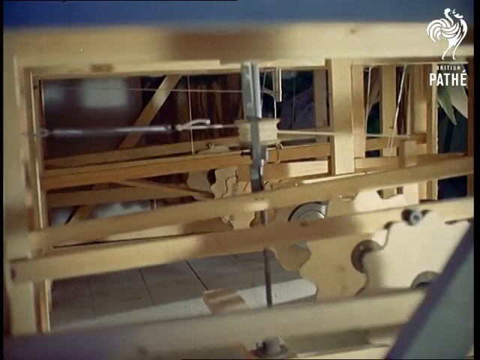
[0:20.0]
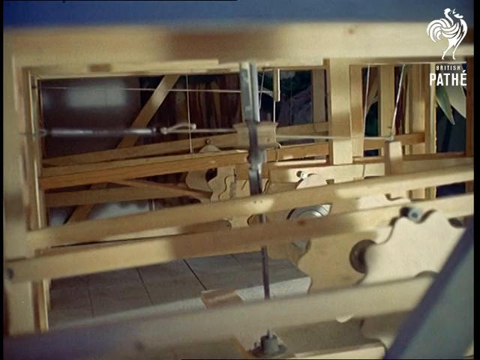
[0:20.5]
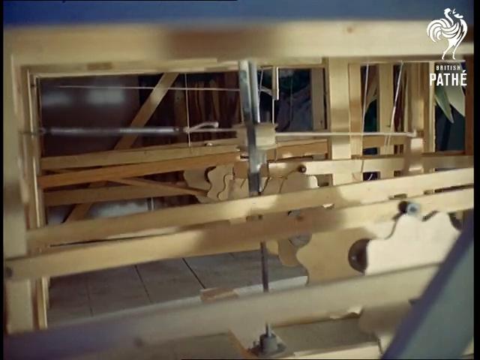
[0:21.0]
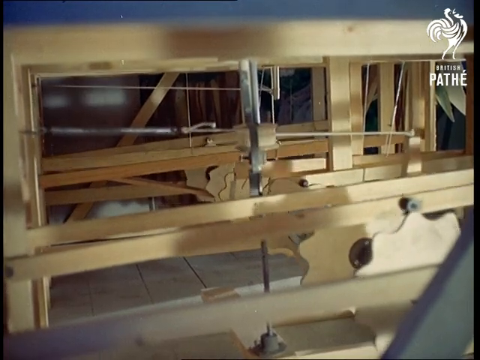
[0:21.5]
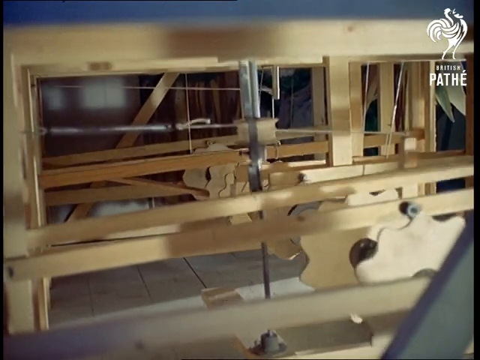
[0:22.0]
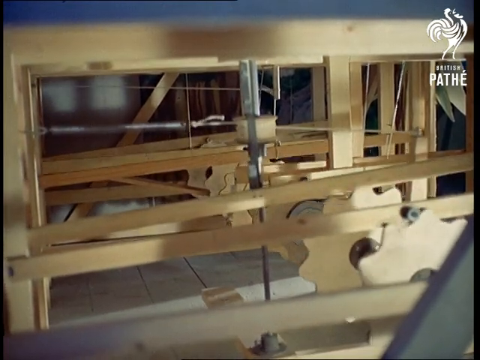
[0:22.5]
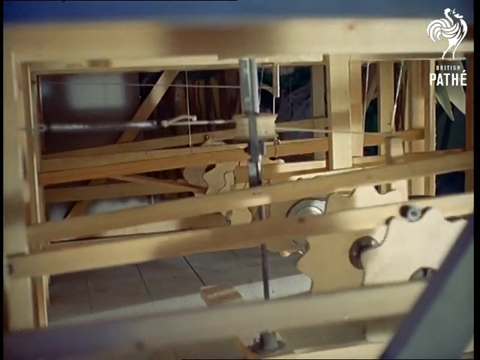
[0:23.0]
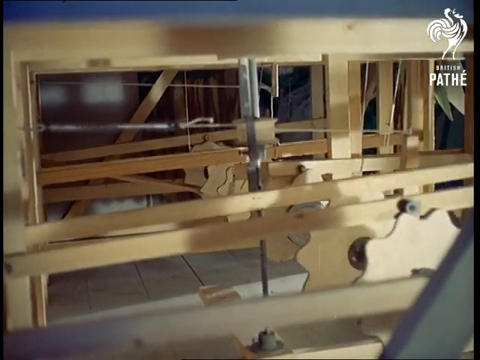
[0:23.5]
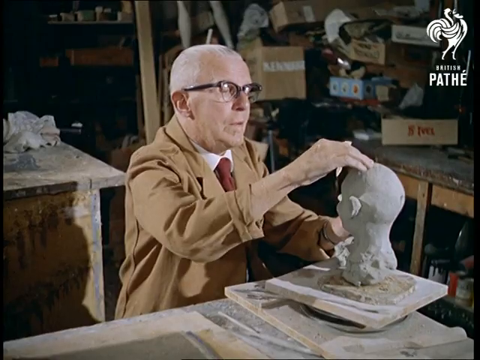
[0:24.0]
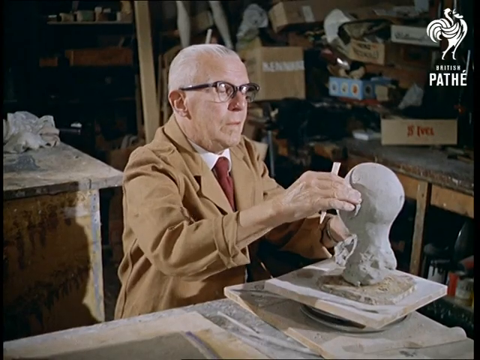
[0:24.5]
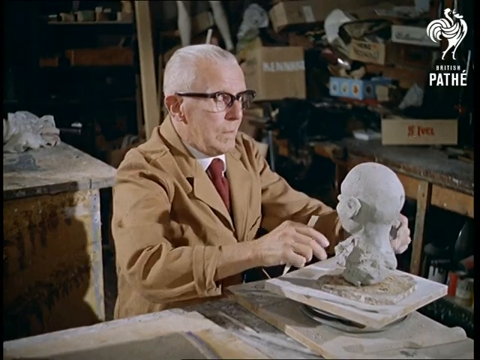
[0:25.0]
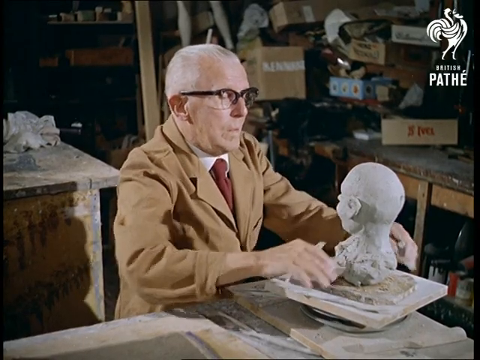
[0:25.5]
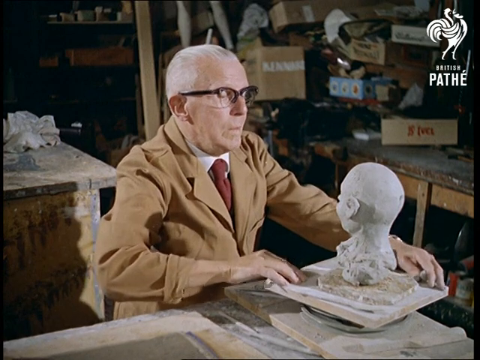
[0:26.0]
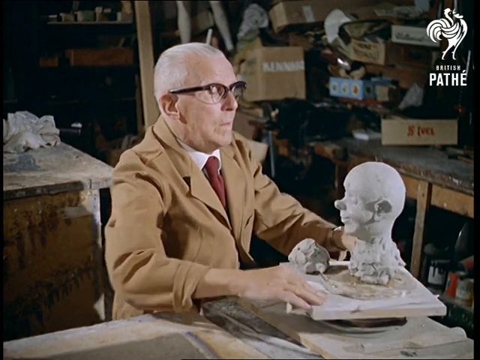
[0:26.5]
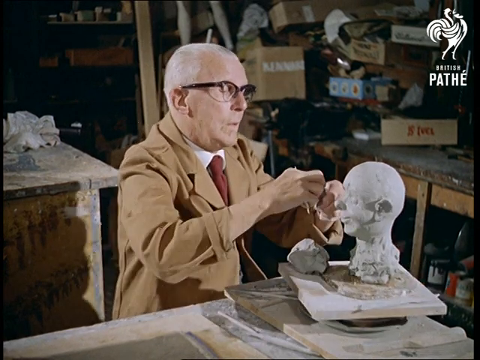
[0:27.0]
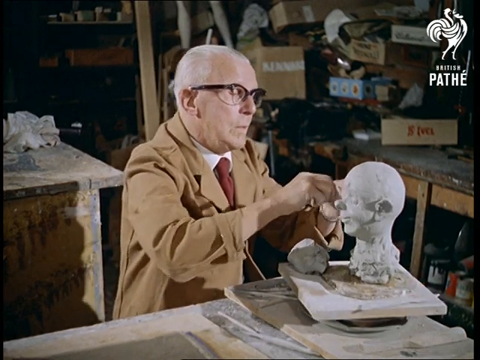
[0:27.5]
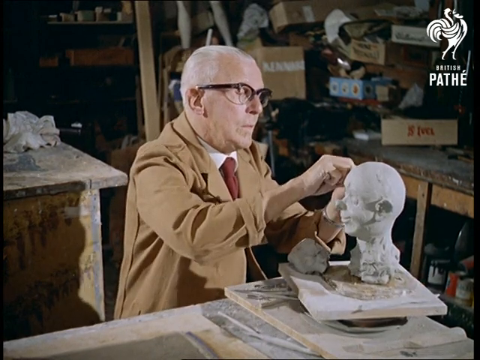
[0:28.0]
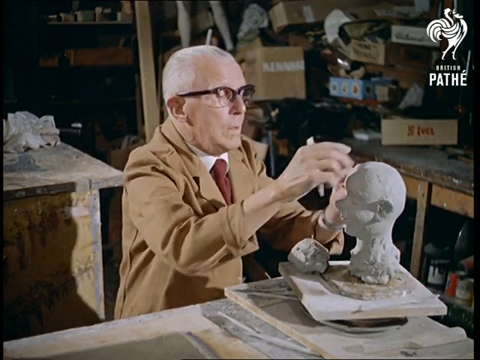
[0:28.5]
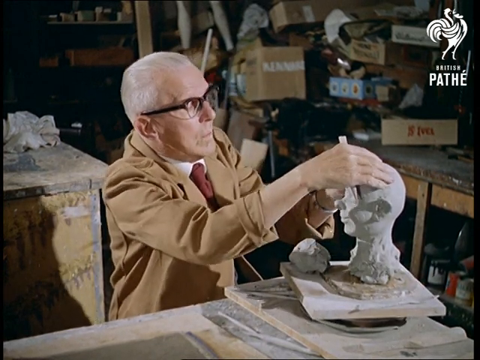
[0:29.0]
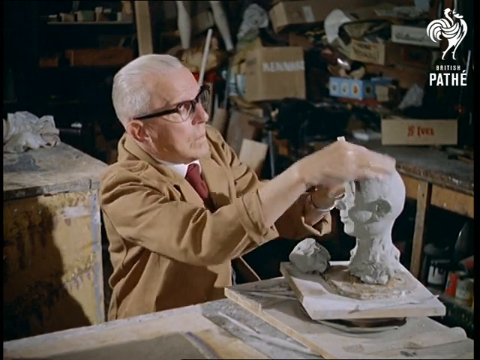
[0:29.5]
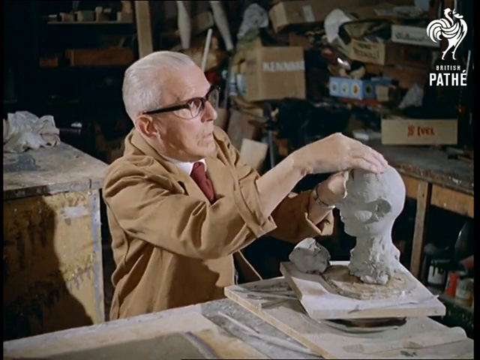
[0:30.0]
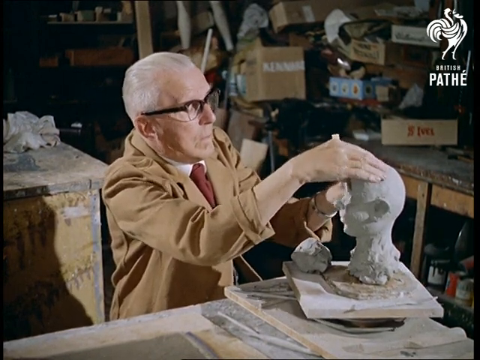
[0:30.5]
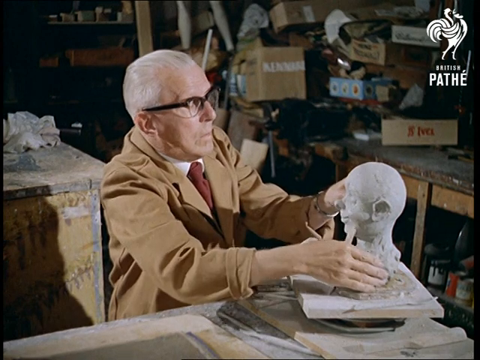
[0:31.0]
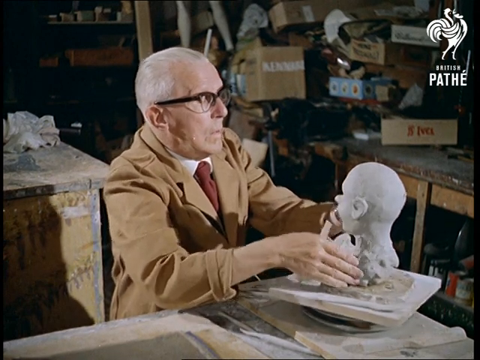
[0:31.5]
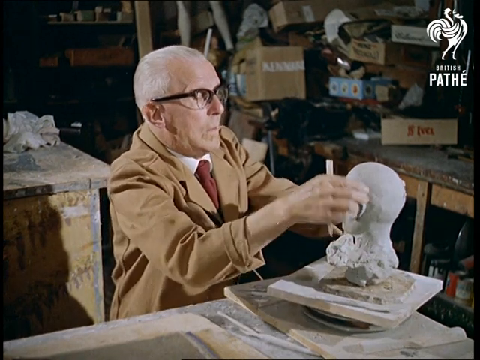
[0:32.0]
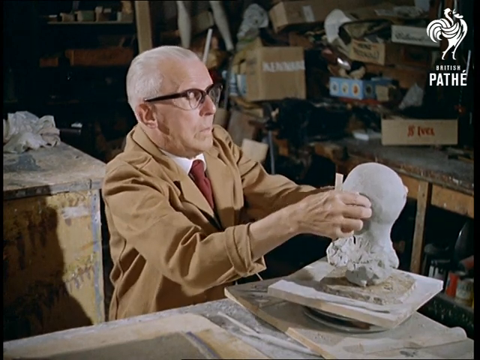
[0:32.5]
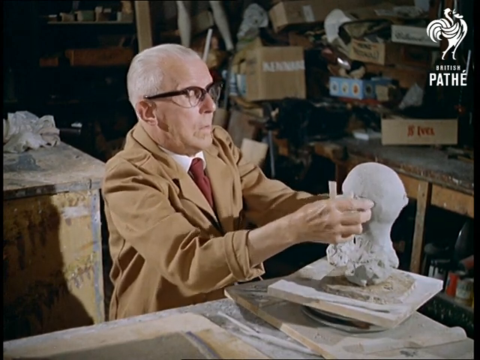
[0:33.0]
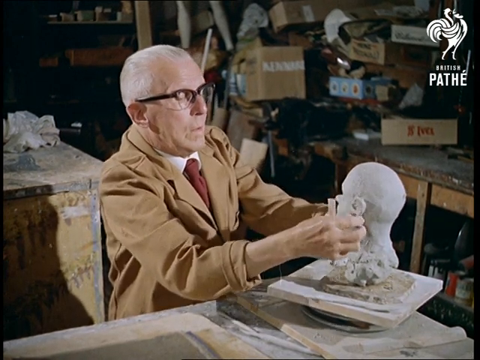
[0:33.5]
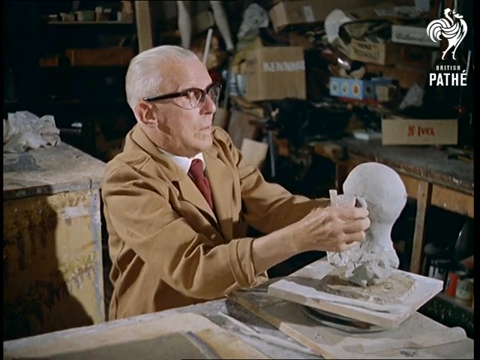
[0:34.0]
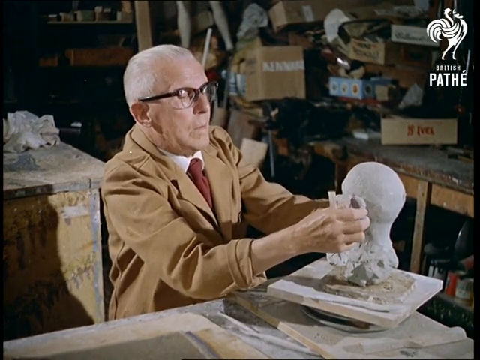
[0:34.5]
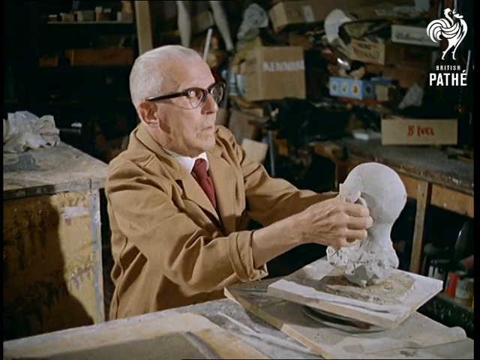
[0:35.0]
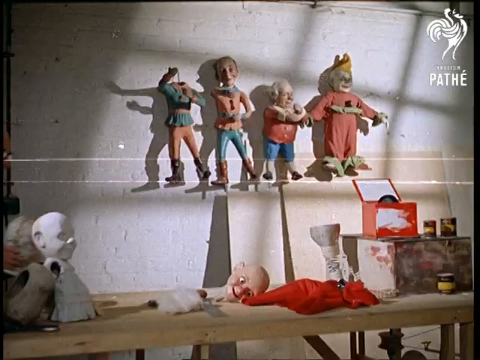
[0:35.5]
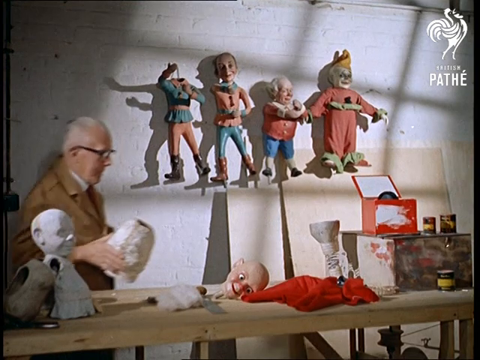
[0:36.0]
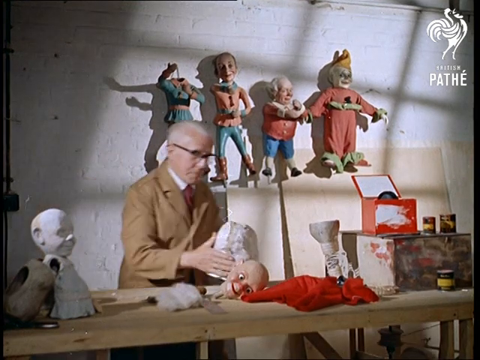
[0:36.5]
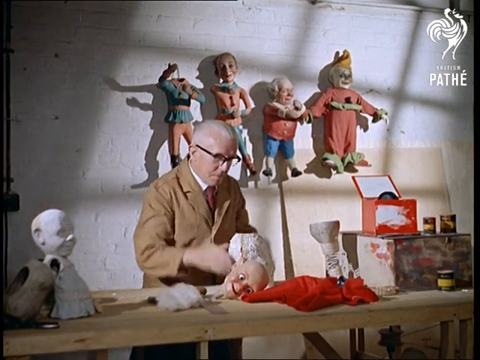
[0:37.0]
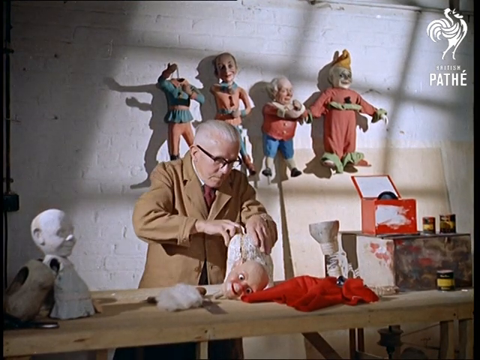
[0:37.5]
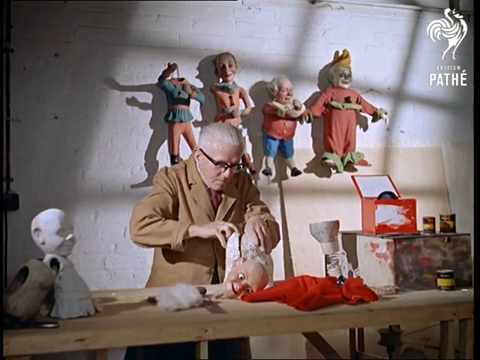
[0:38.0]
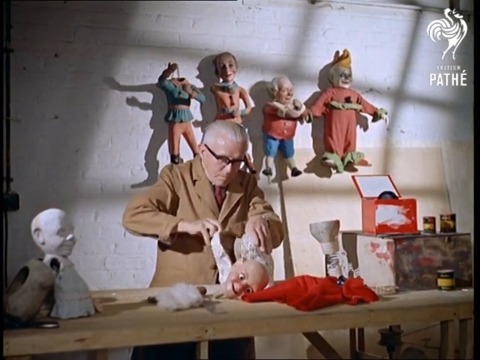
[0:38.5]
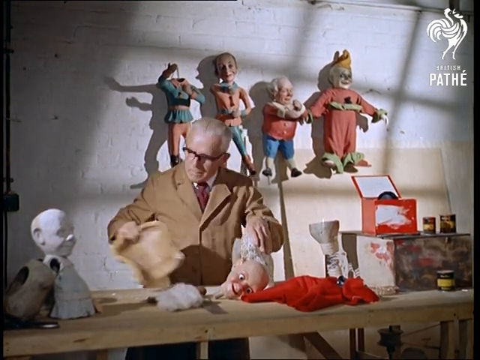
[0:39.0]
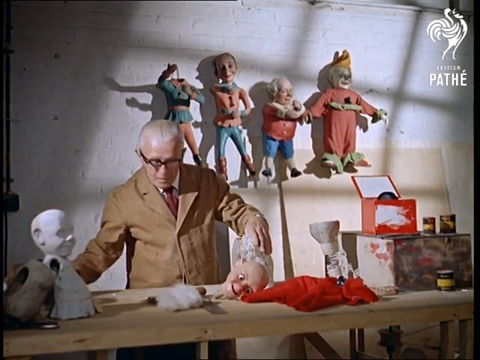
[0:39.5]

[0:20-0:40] The figures' eyes move, their hands and heads move right and left, and they play their instruments. They all seem to be connected to an underlying wooden mechanism. The video shows that mechanism, with gears turning and pulling up strings; when the strings are pulled or pushed, they create the puppets' movements. The video then moves to an older-looking gentleman with gray hair, wearing a brown jacket, a shirt, a red tie and black glasses, who is making a sculpture sitting on a table in what is kind of like an old workshop. He makes the sculpture from some sort of clay, turning and adjusting it with tools in his hands, working on the sculpture's ears and face. The video then moves to another desk, where the sculptor brings one of the statues, carefully places it on the table and starts to open the mechanism inside, seemingly about to adjust some sort of mechanism in the statue.